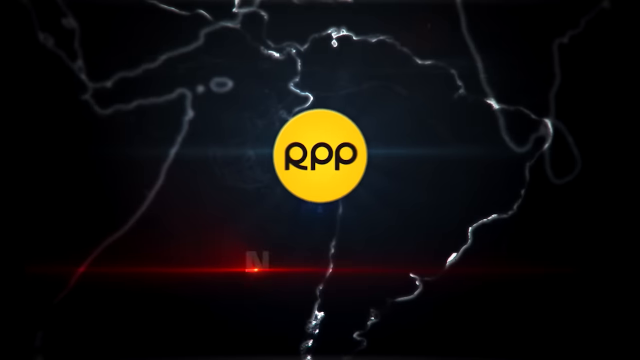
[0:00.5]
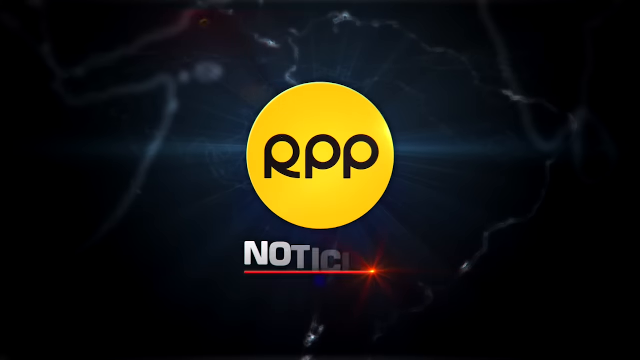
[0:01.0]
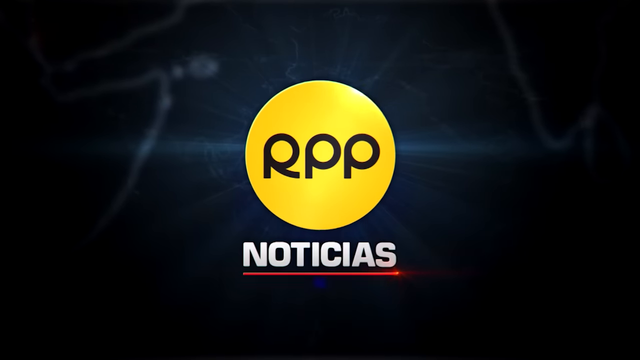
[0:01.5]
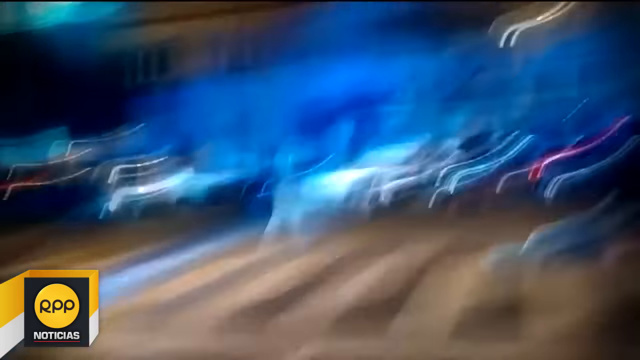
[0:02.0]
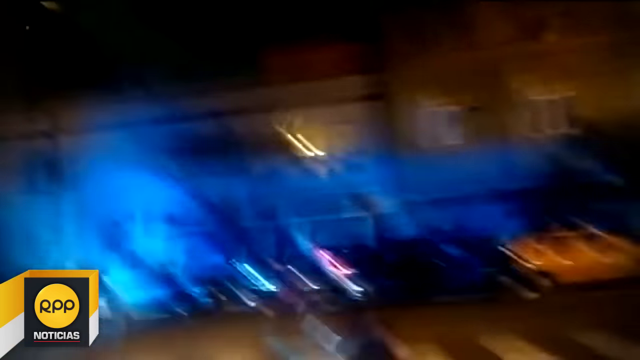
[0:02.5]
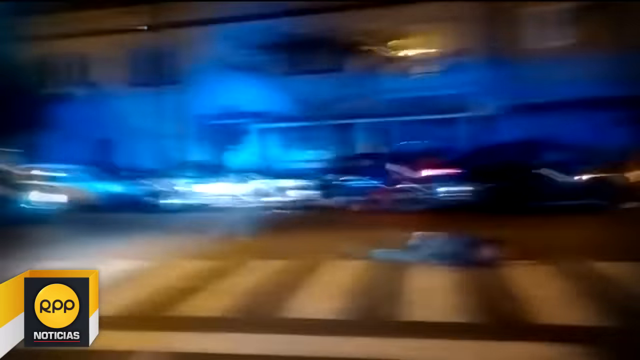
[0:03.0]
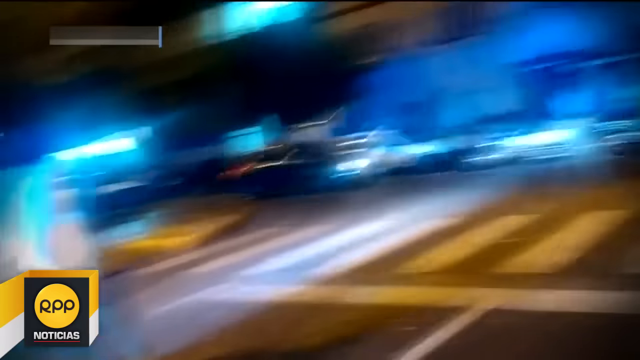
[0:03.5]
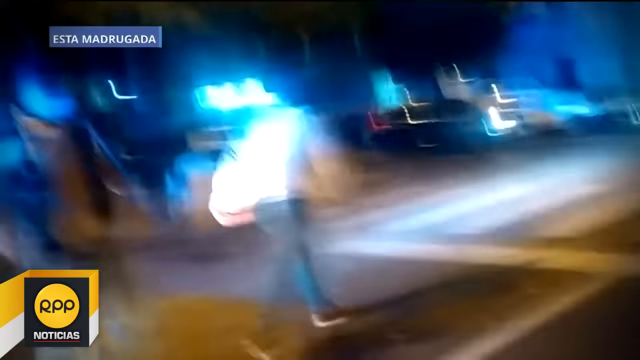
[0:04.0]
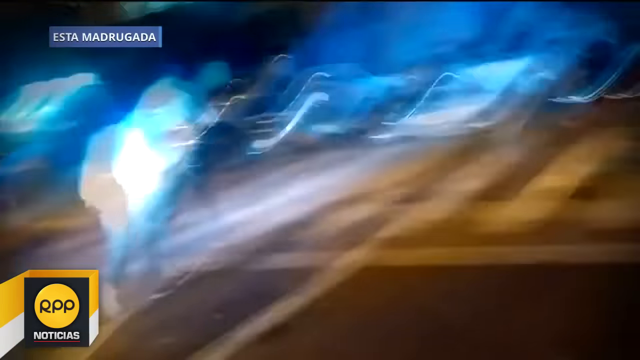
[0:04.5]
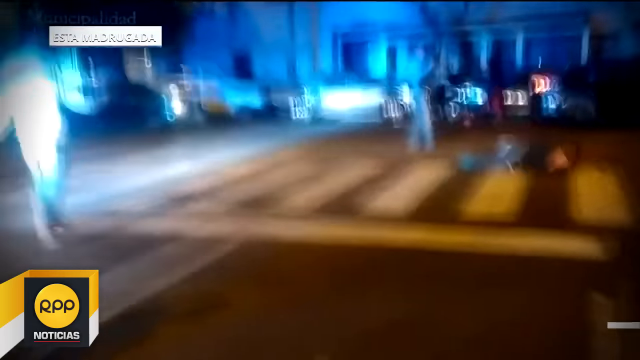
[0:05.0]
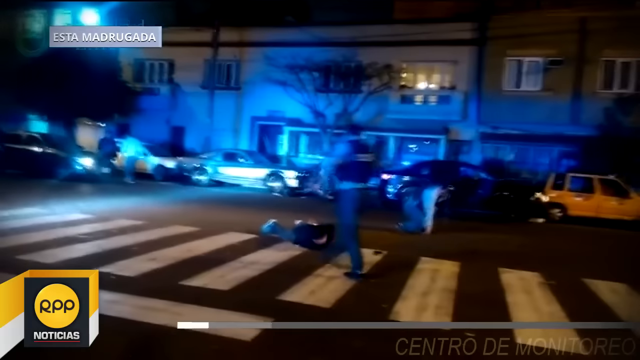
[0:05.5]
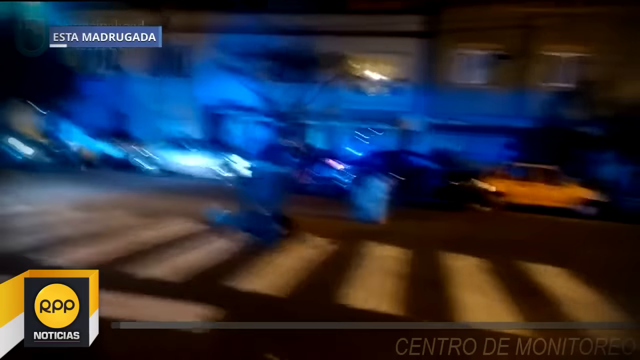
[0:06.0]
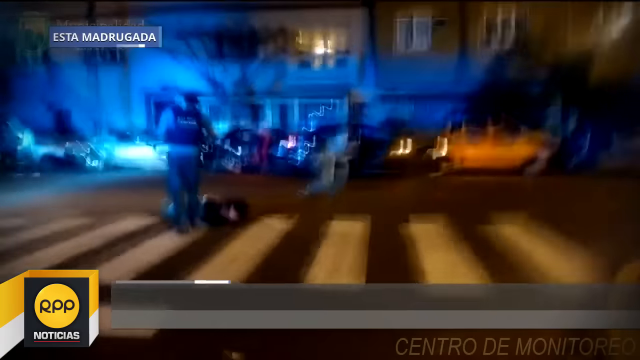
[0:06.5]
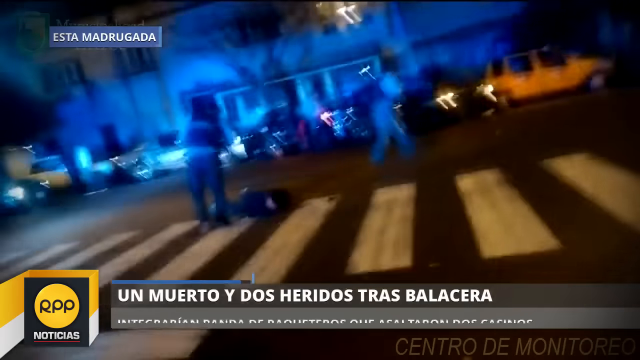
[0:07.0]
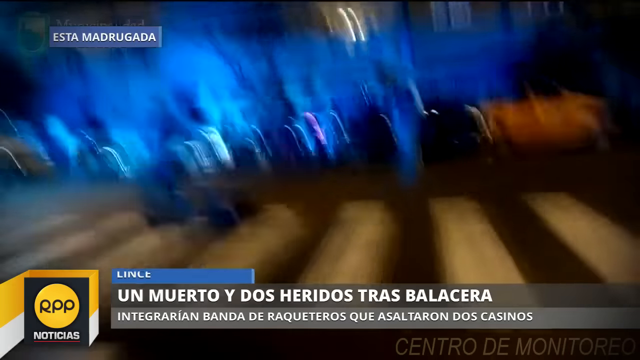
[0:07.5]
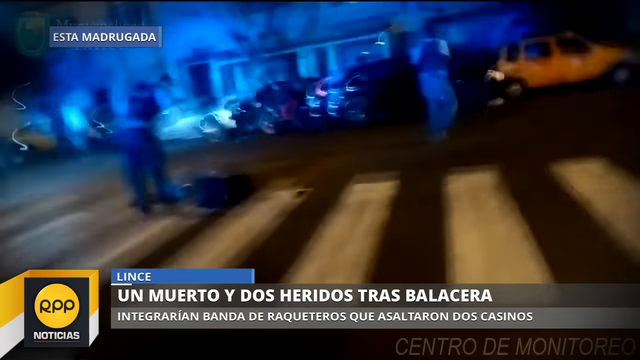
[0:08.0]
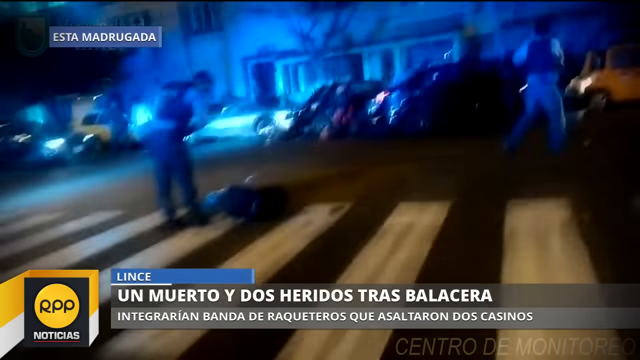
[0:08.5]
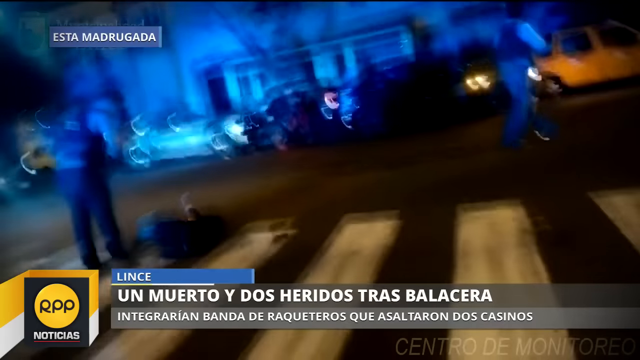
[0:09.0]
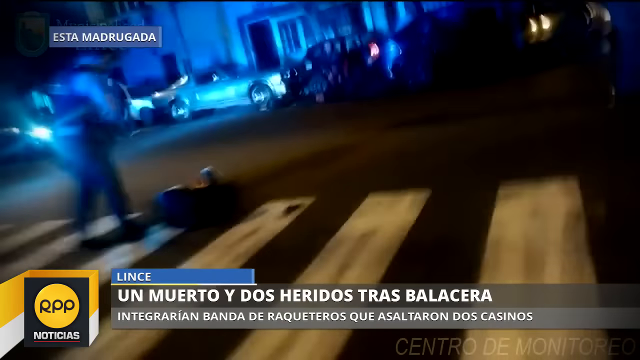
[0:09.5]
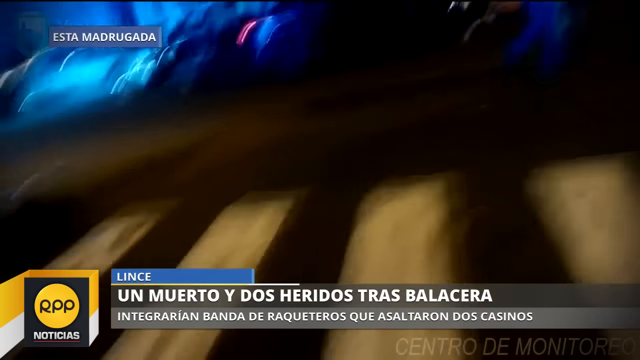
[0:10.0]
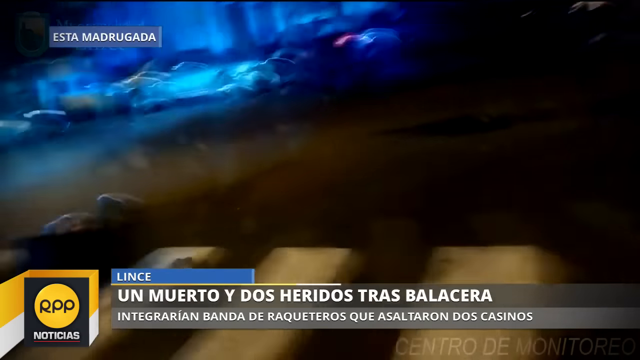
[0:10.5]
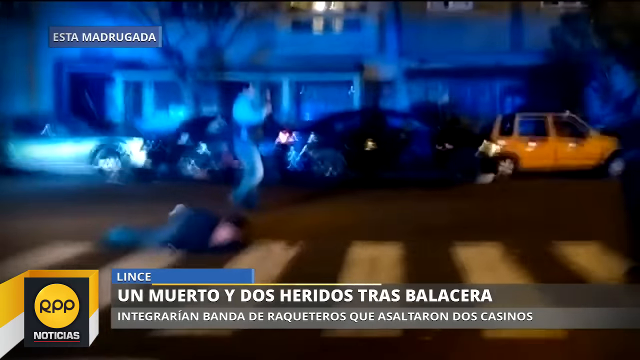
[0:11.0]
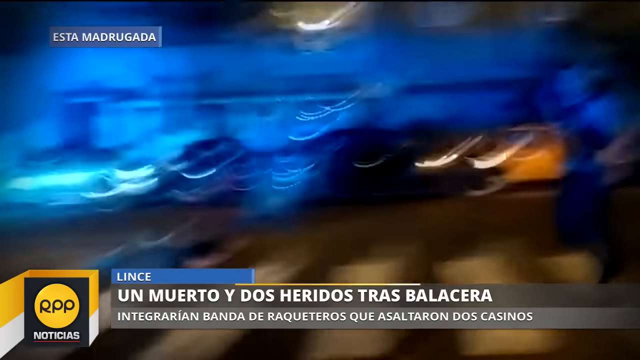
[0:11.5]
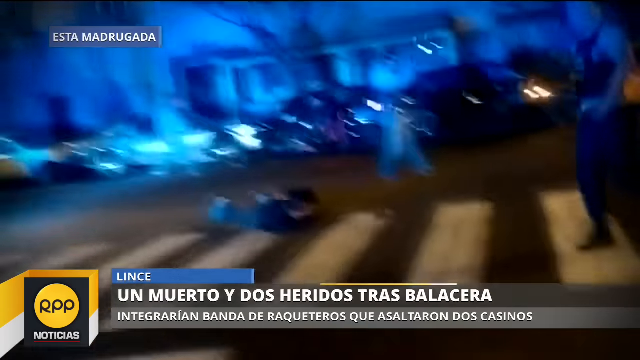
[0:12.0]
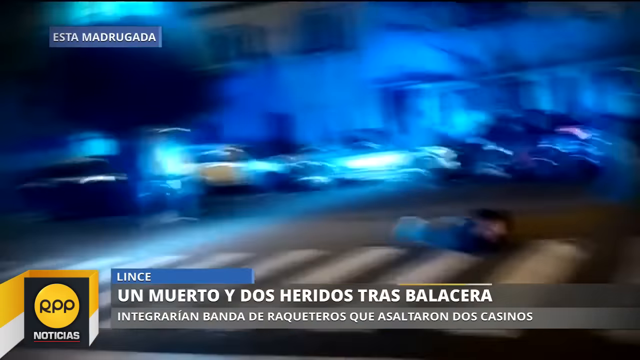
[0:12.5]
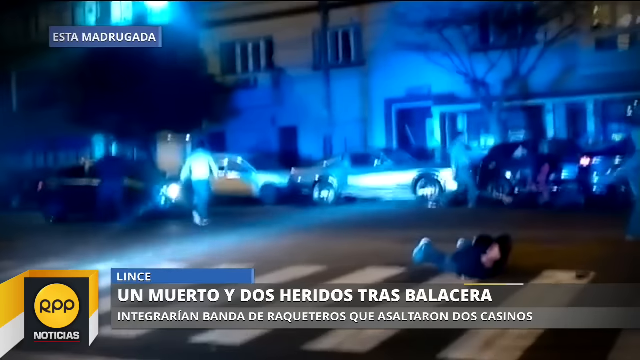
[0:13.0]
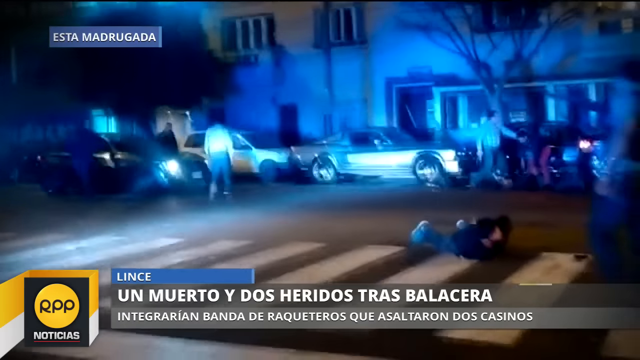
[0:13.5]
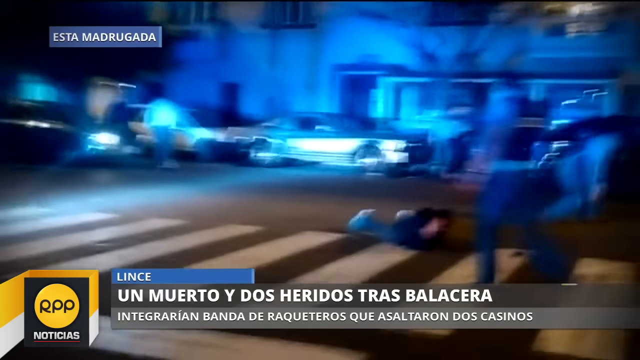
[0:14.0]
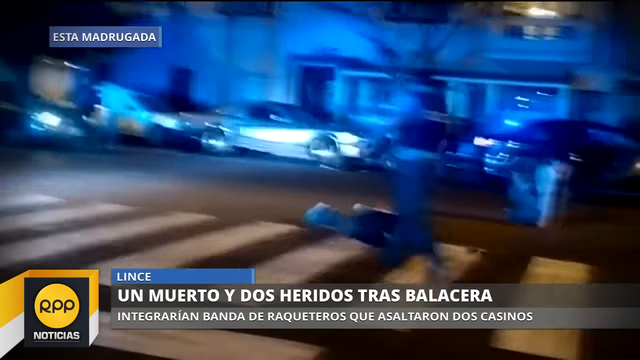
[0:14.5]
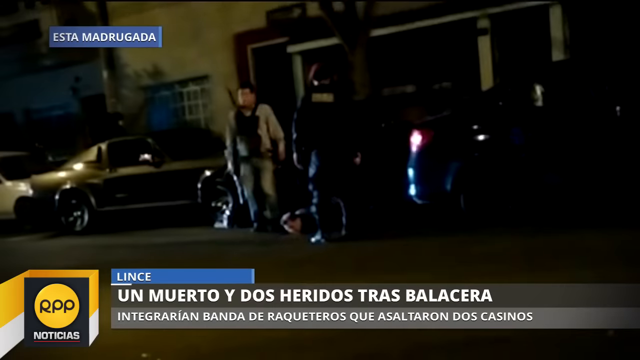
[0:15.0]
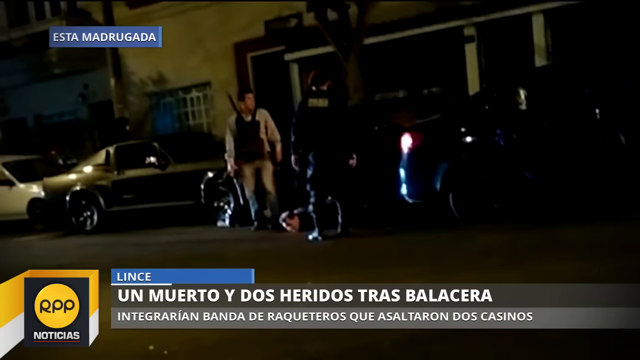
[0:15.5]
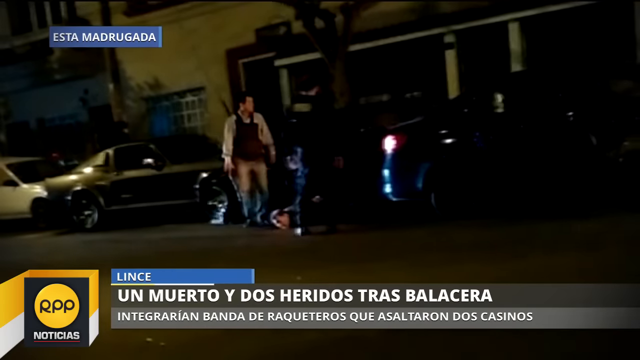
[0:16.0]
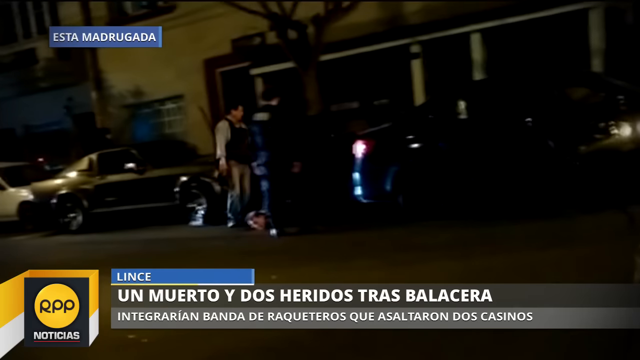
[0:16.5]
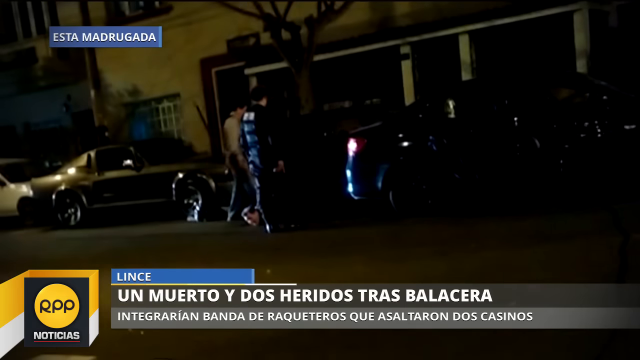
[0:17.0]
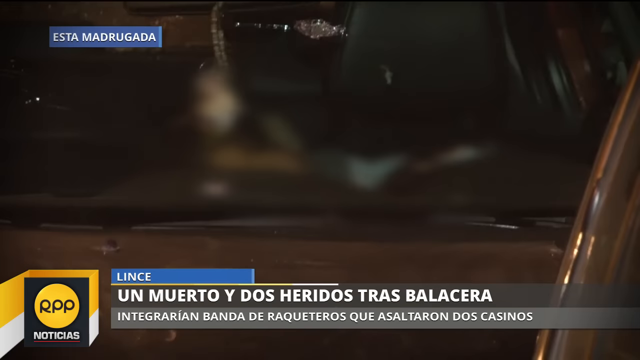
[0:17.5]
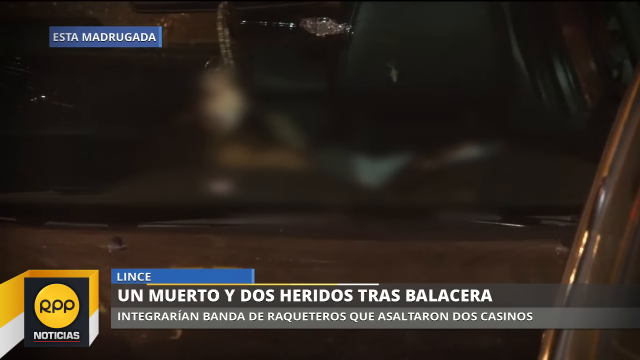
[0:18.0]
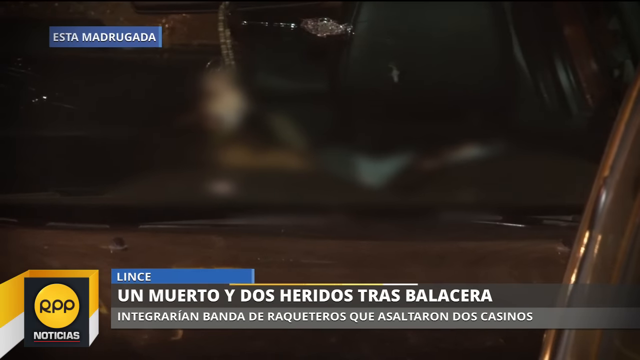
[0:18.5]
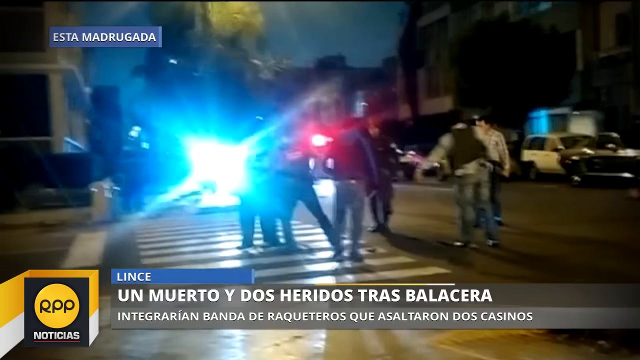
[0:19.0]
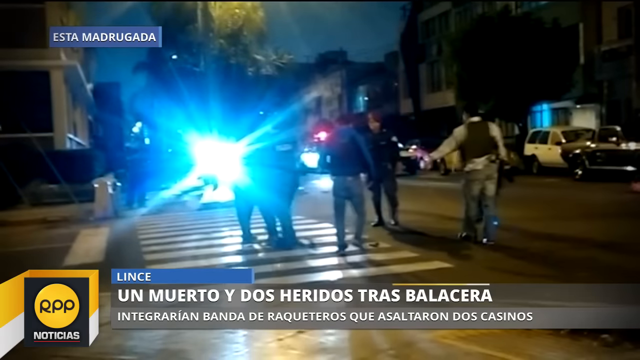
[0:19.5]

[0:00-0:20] The video opens with a graphic of an abstract background, followed by a series of nations in outline against a dark setting. A logo appears: a bright yellow circle with "RPP" in black lettering at its center, and underneath it "Notitious" in white lettering with a red line beneath it. The scene changes to an outdoor urban street at night, where a variety of vehicles are in the street; the view is blurry, with a lot of bright light shining on the vehicles. An individual is lying in the middle of the street while the camera shakes drastically left and right. The view turns toward the left of the screen, where an individual walks toward a crosswalk and a number of people kneel down, picking things up off the ground. What appears to be a police officer walks over to a person on the ground who is in handcuffs, while other individuals walk left and right. A wide-angle shot follows of people standing next to vehicles on the side of the street beside a number of businesses, and then another shot shows an individual, handcuffed and blurred out, at the base of the vehicles.